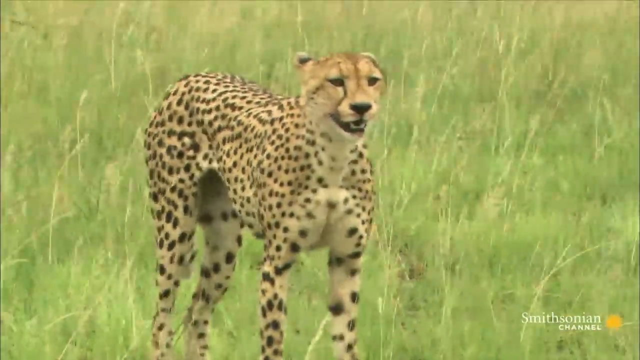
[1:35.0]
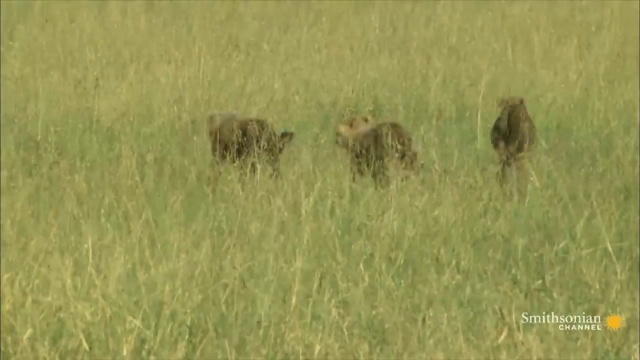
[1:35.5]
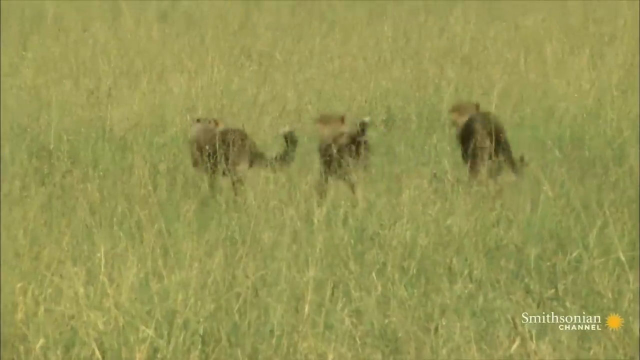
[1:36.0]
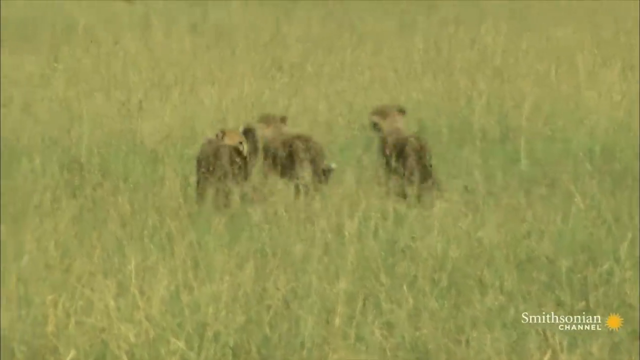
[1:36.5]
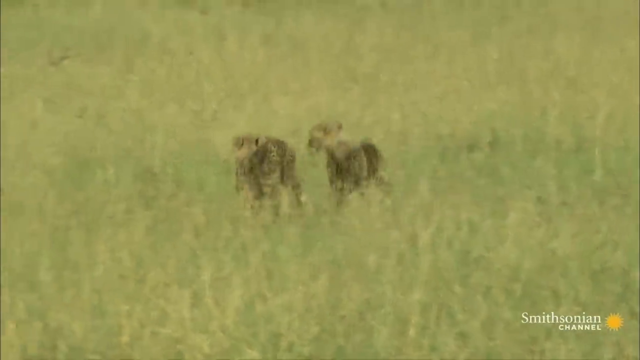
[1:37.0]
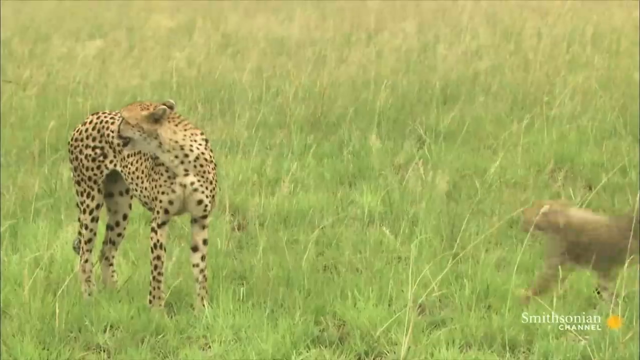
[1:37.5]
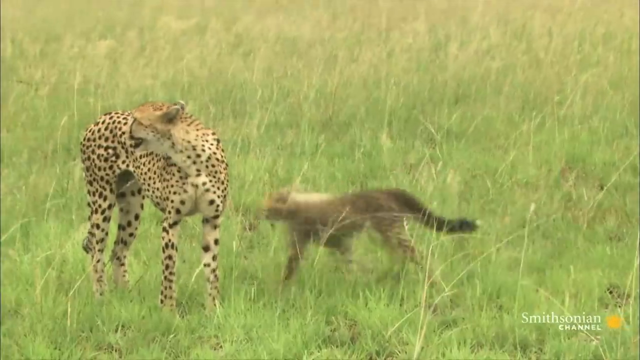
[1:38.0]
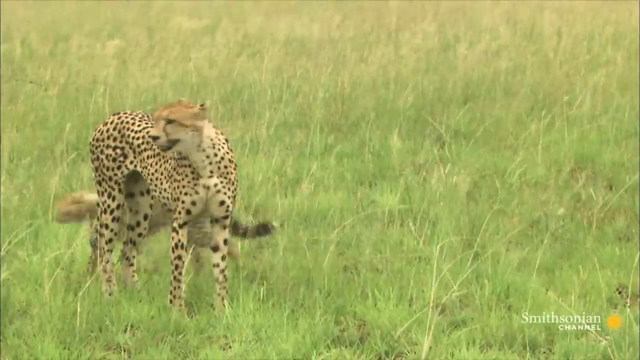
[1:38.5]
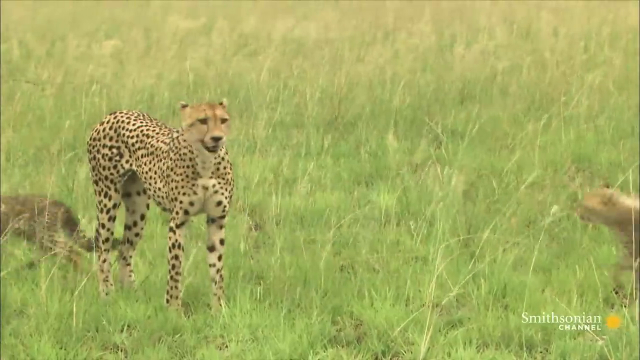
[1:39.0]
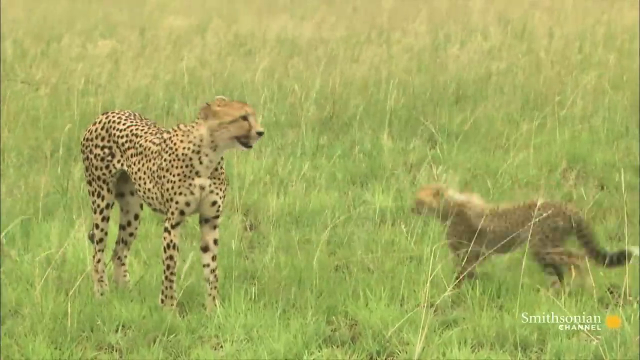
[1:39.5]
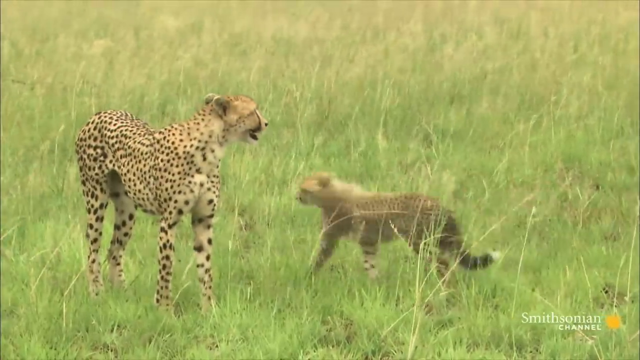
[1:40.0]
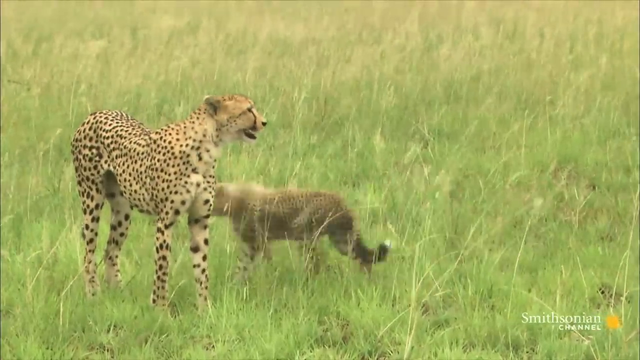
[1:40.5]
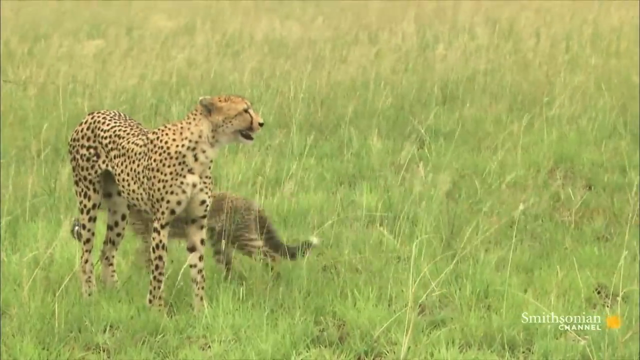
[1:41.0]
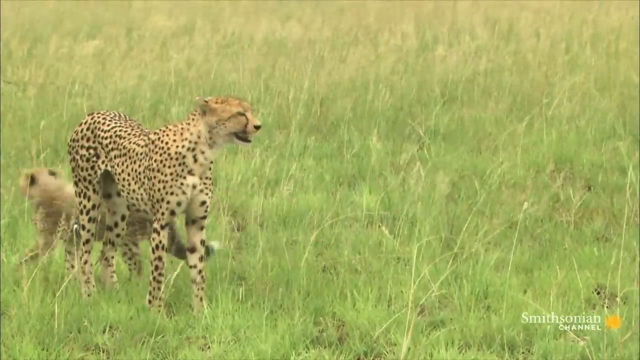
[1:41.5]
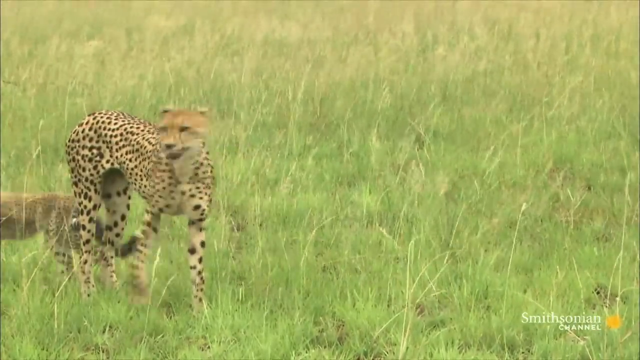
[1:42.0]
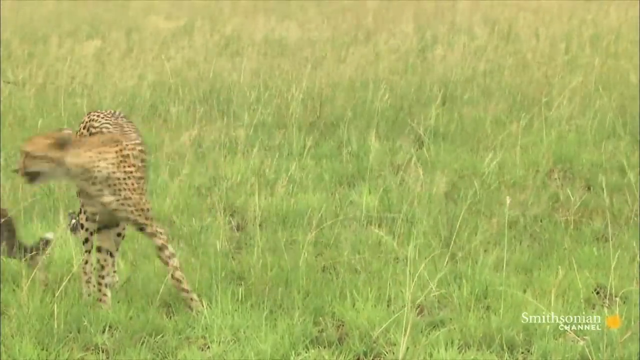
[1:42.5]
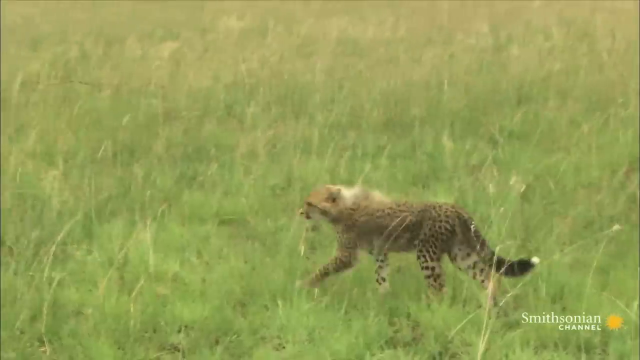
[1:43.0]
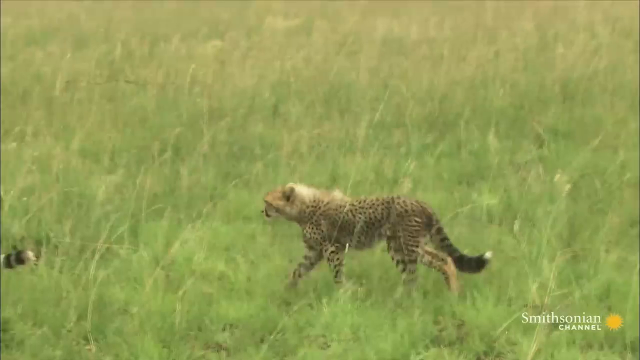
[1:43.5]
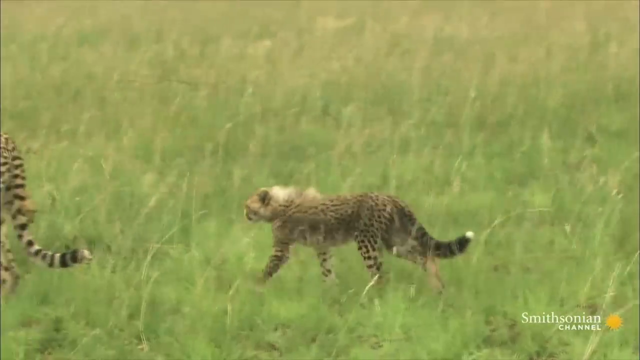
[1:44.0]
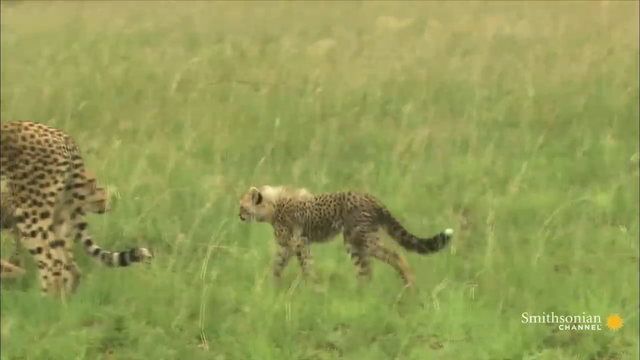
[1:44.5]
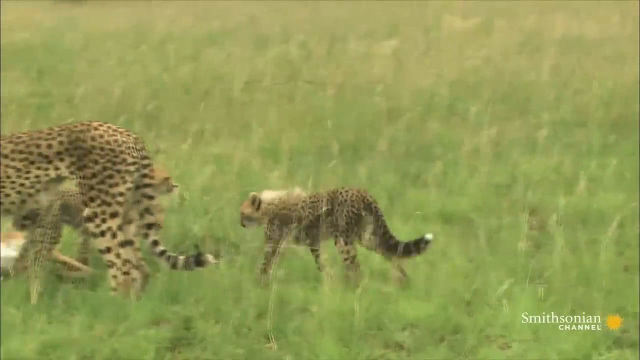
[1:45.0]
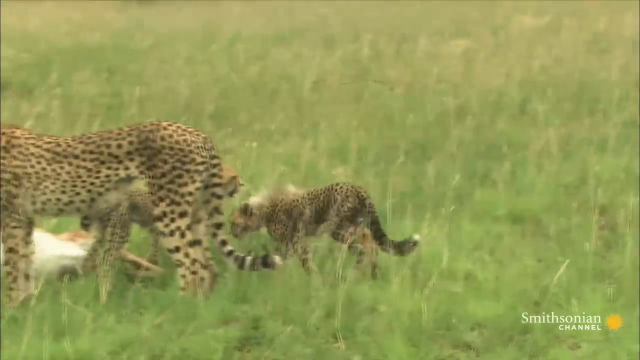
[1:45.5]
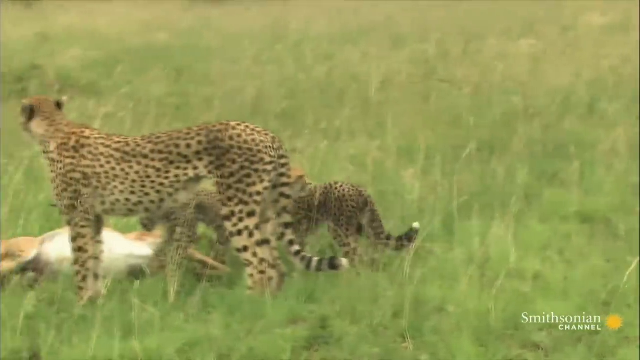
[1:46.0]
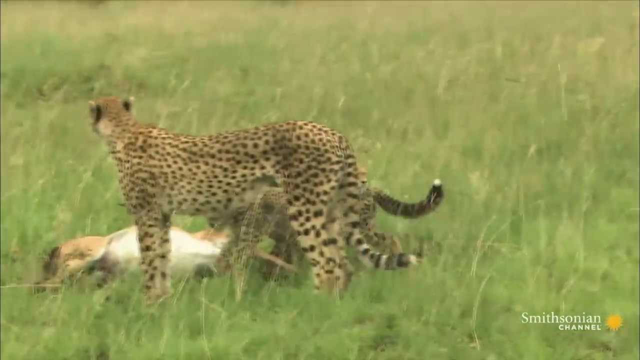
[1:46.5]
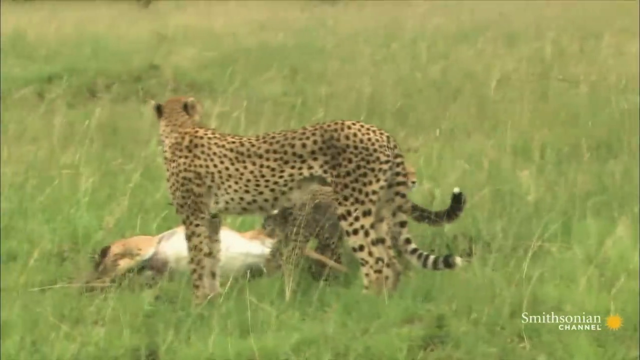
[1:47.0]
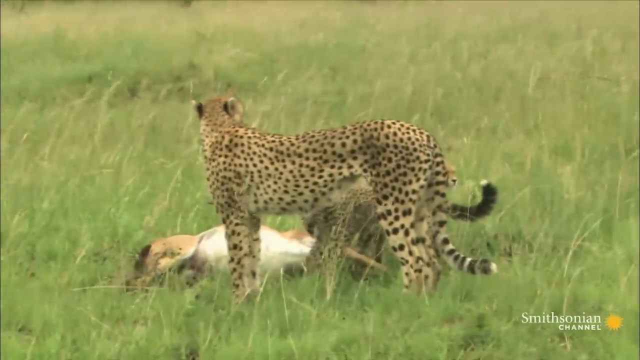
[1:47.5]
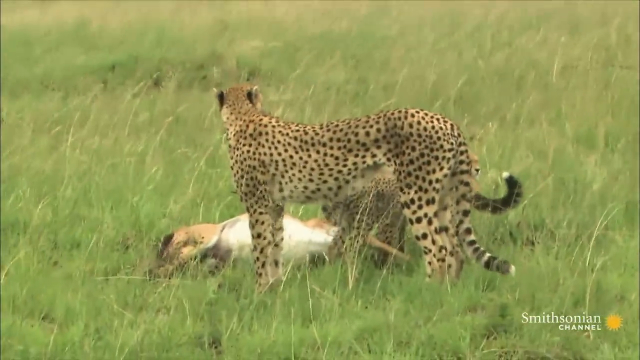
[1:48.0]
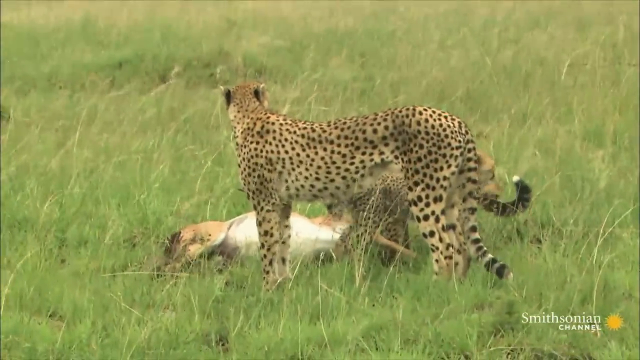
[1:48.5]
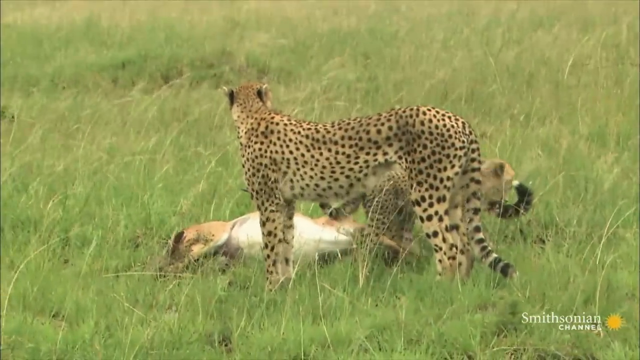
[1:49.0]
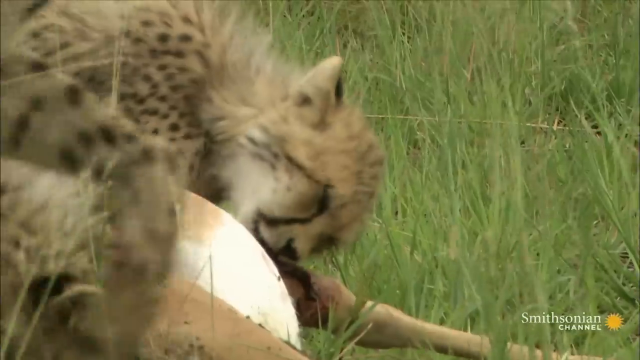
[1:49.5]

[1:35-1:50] The babies run through the forest and come up to the mother cheetah, who stands waiting for them next to the impala, seemingly standing over it and guarding it from other animals. The babies are pretty big but still clearly babies. They run over and are about to eat the impala. The mother still looks a little tired and sort of walks over with them. At the very end, one of the babies bites at the impala and a little blood is visible before the shot cuts off. There are a couple of different scenes.